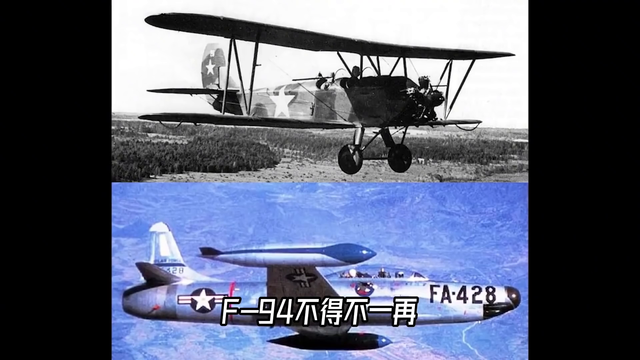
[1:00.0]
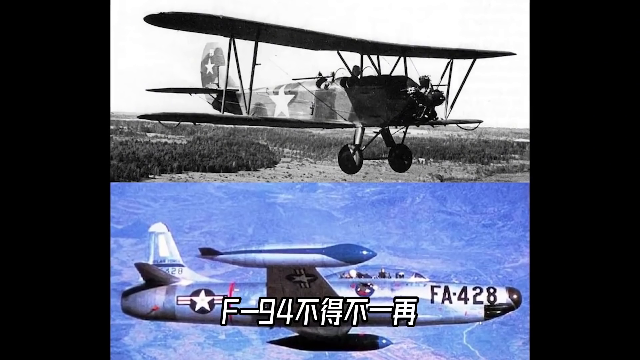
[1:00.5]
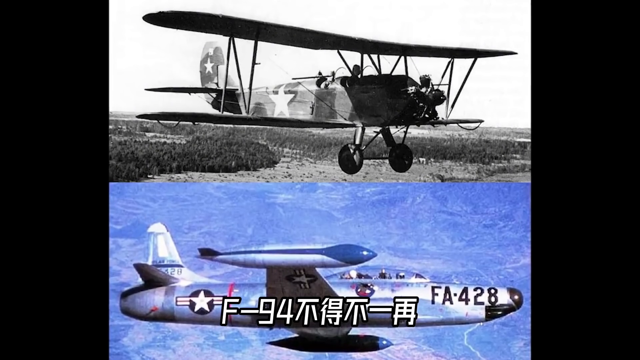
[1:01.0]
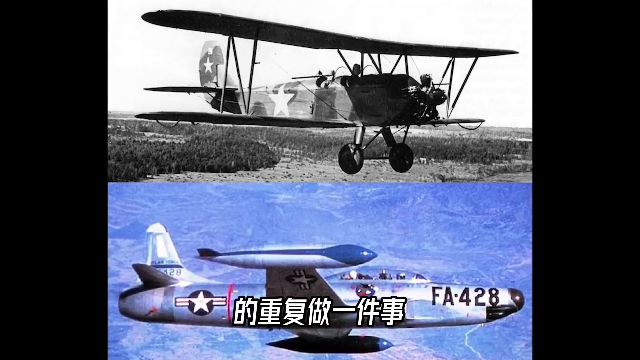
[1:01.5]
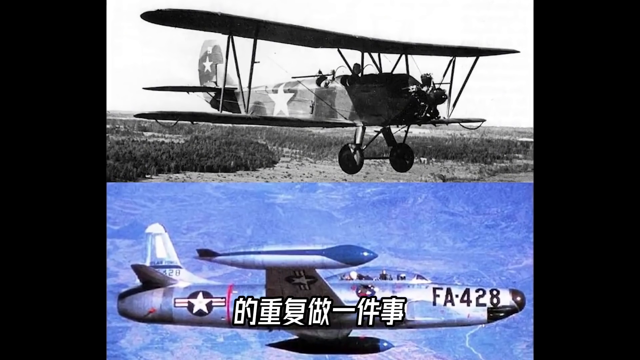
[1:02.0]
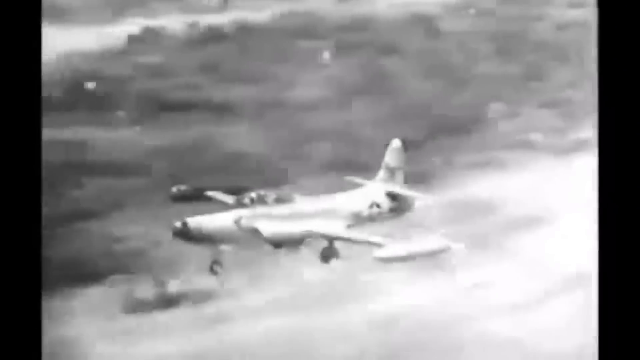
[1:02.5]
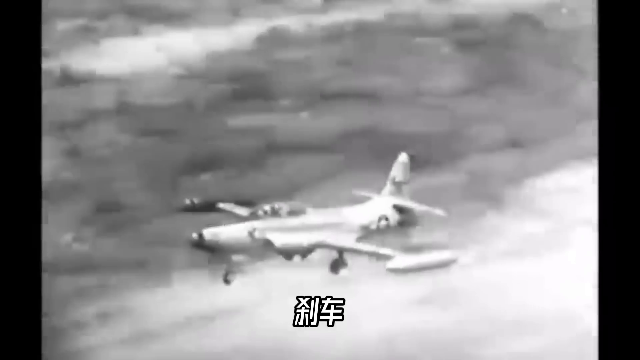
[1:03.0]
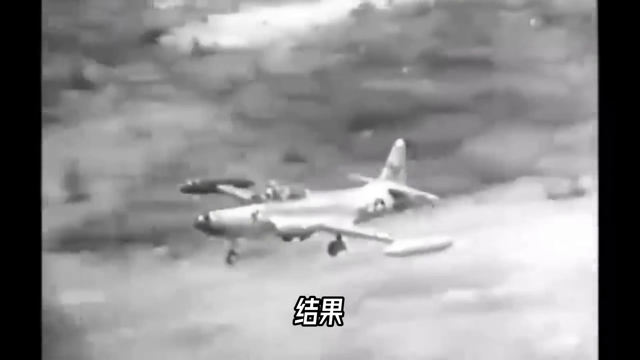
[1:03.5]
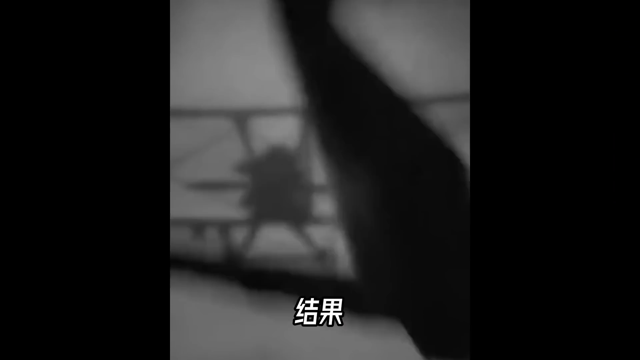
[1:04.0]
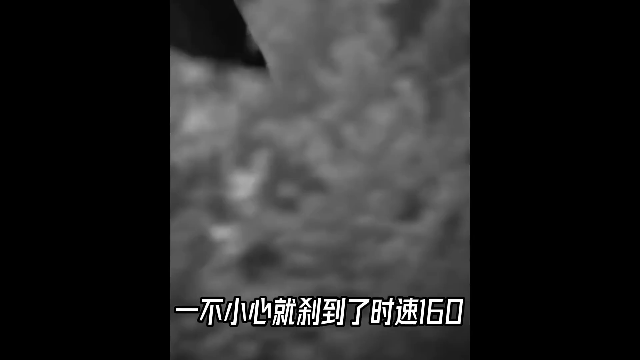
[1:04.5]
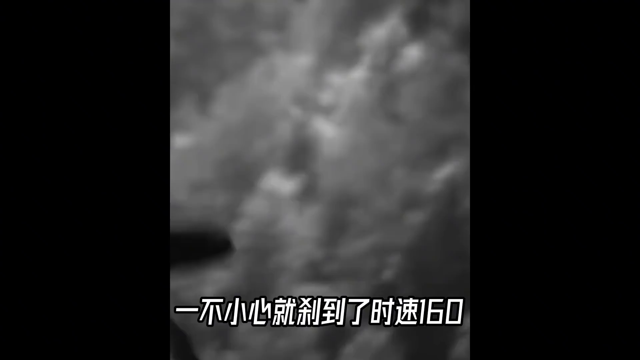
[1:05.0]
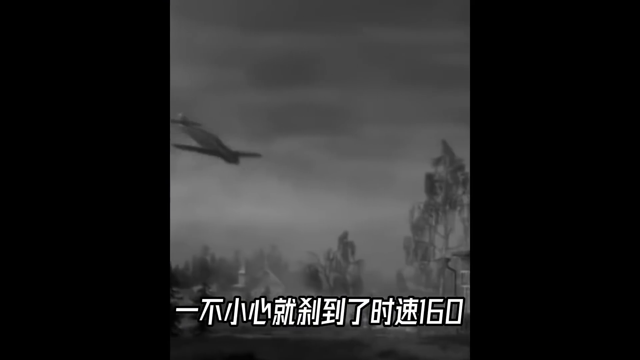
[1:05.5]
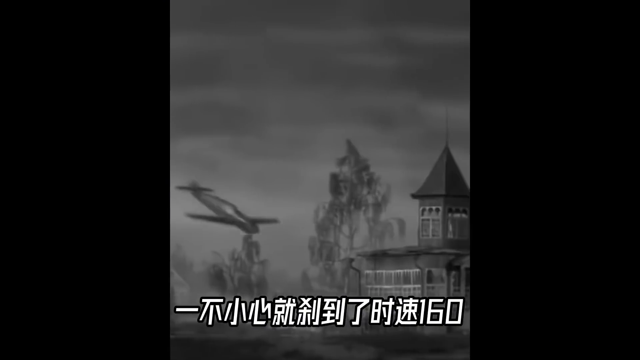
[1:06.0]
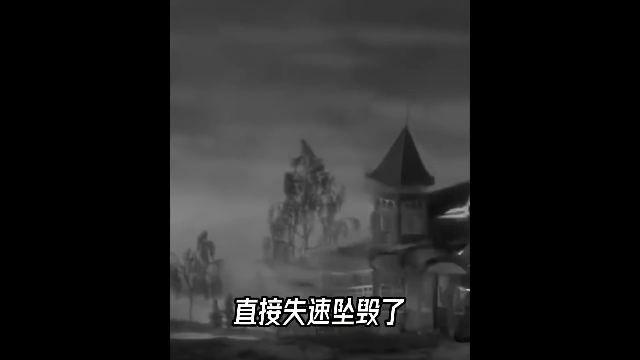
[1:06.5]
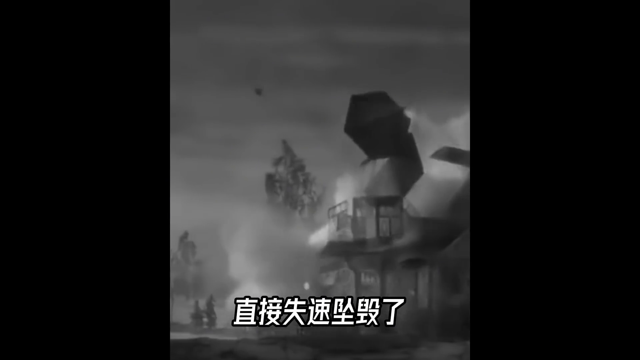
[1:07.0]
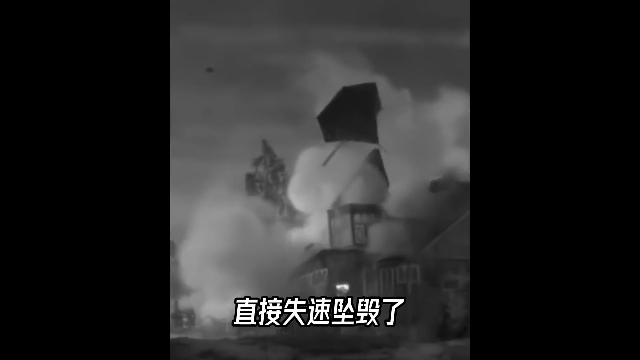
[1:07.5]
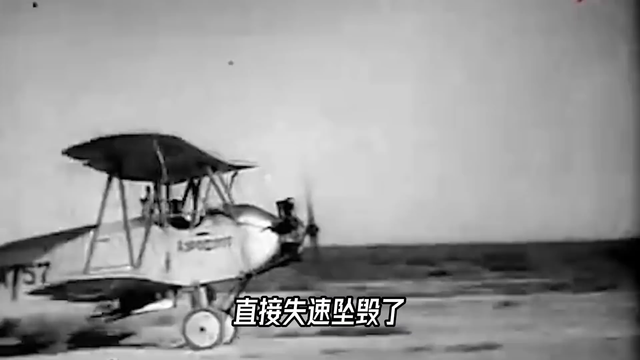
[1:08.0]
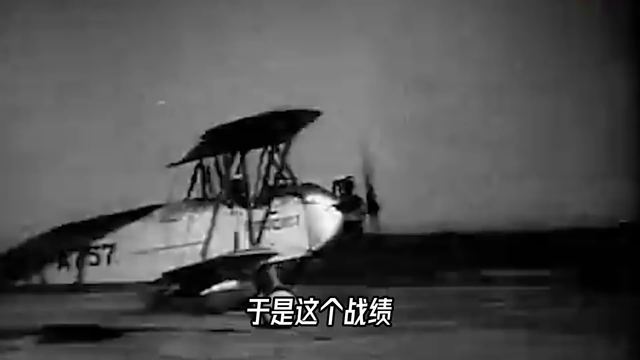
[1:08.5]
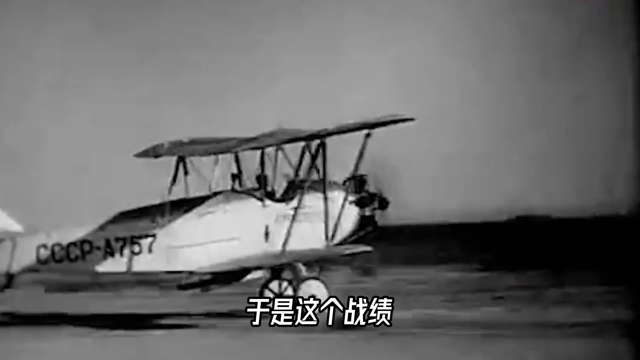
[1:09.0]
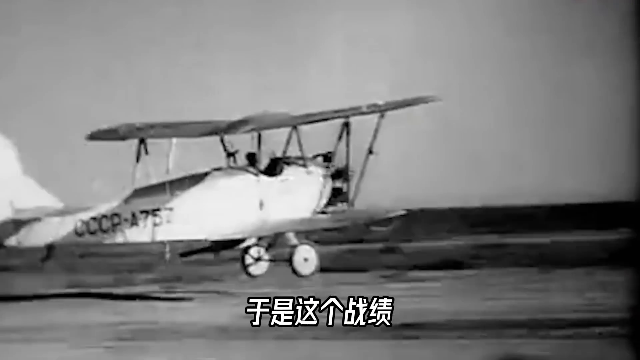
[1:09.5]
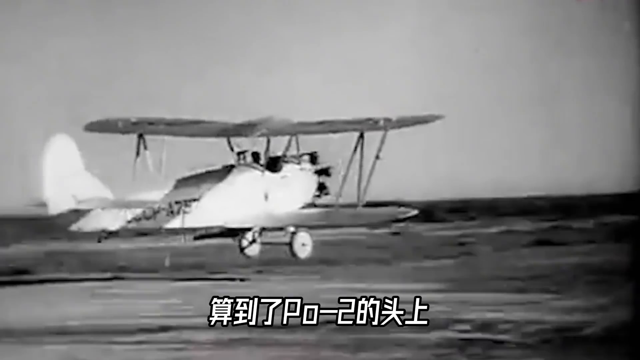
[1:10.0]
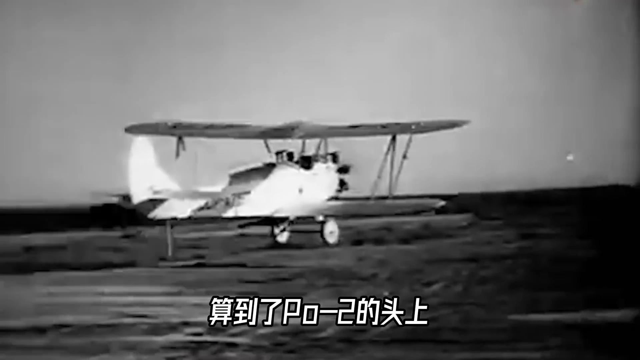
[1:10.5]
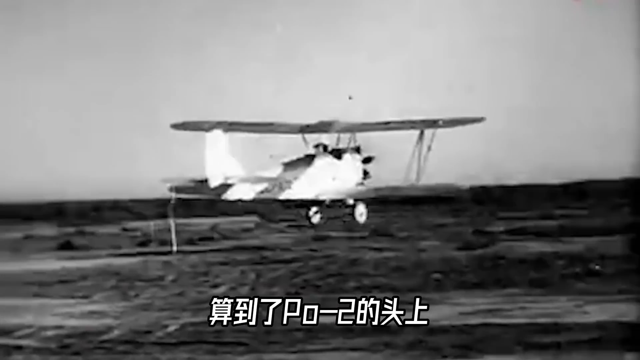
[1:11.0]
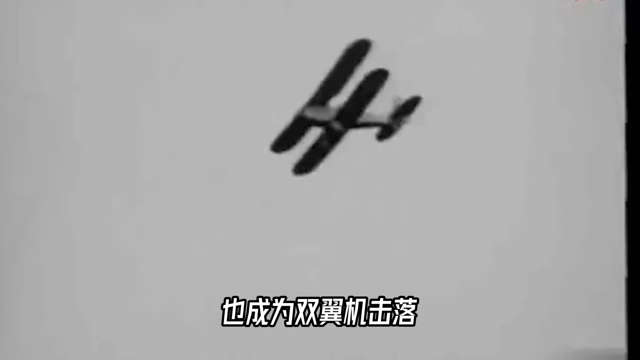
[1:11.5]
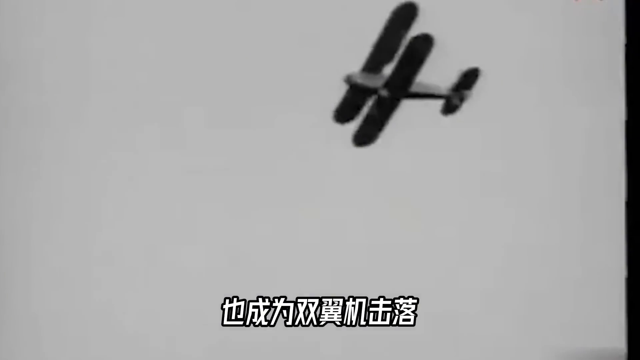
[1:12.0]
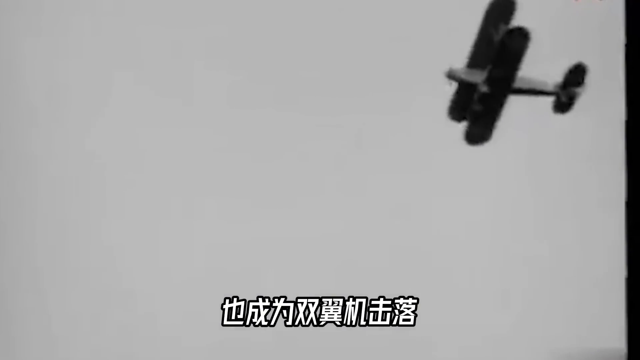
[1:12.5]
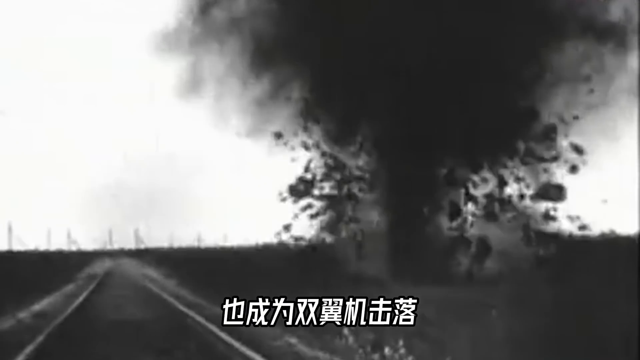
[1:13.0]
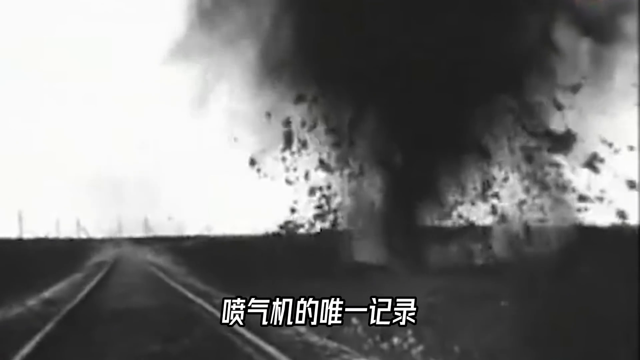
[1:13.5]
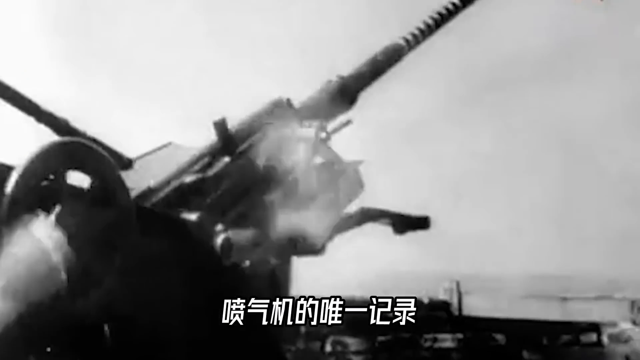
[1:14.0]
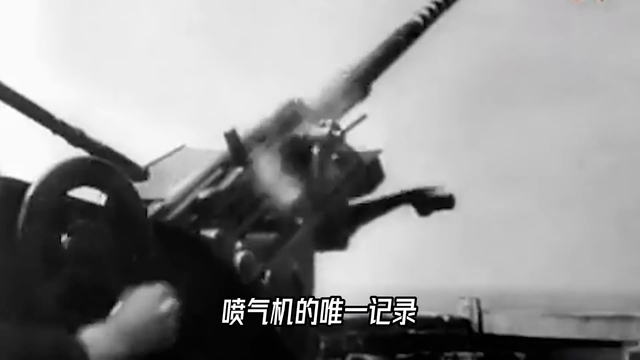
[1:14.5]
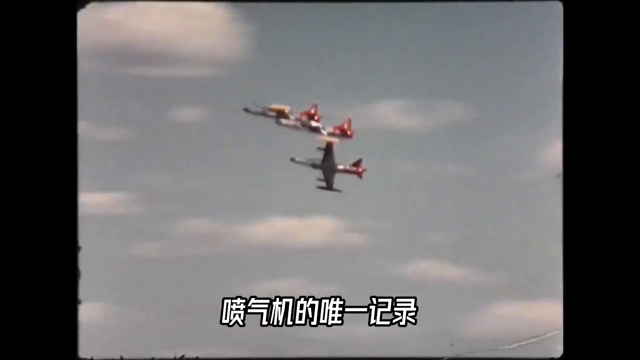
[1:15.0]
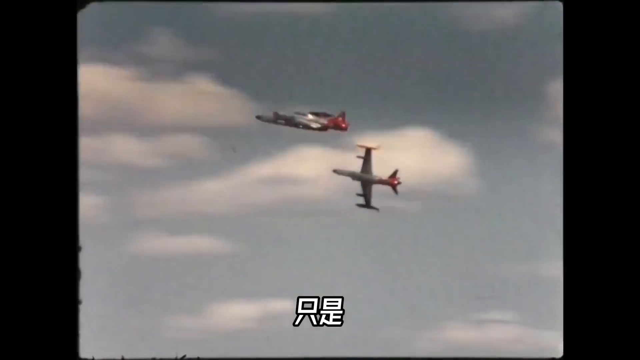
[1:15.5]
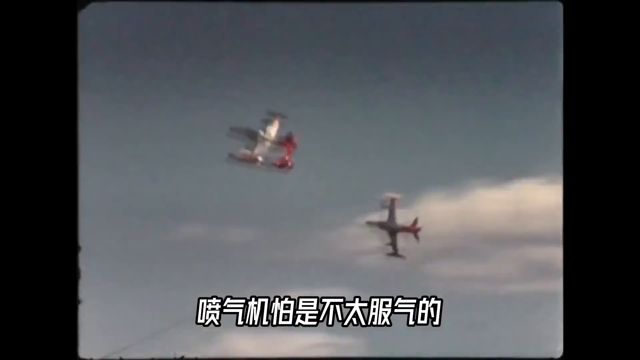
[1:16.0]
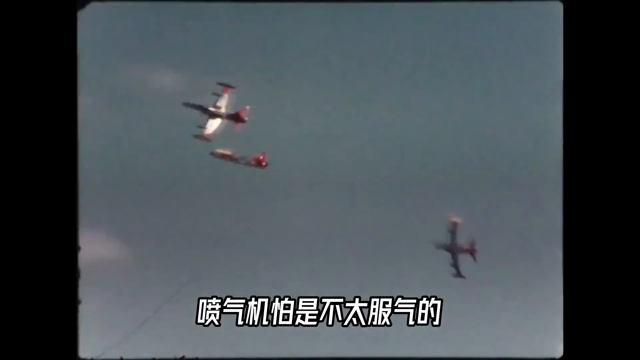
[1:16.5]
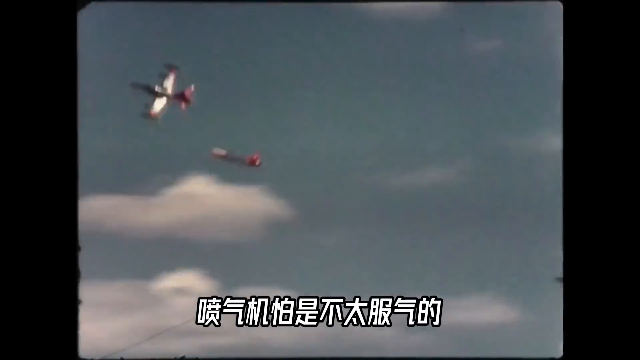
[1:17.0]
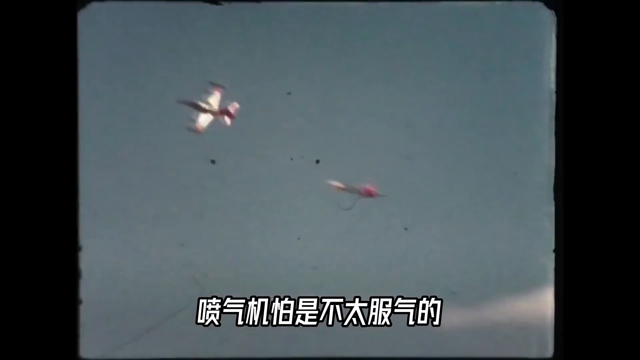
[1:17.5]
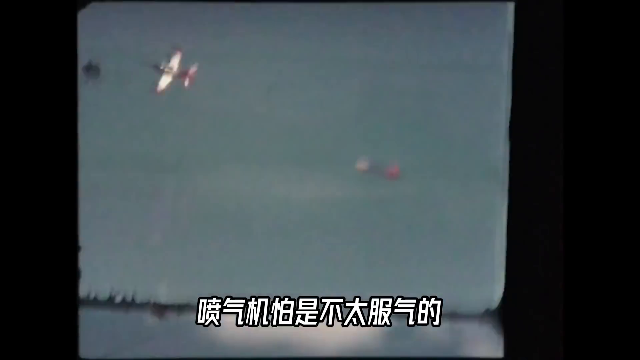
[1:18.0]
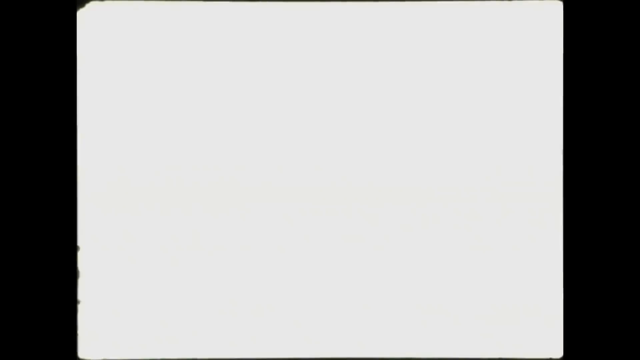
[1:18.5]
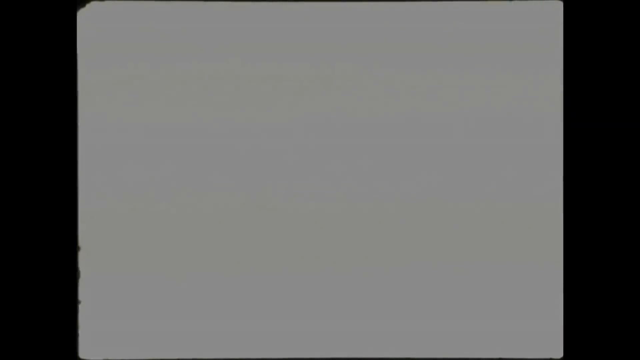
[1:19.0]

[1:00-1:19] Black-and-white scenes show fighter planes, some flying over towns, with an explosion between them. A caption in an Asian alphabet, either Chinese or Japanese, runs across the bottom of the screen. One scene shows a very large explosion. There is a scene of an open propeller plane on a runway, which then takes off, and another similar plane flies through the air. All of this footage is in black and white, with a continued caption across the bottom of the screen. The video cuts to a machine gun on the ground aimed at the sky and being fired. It then switches to color footage of three very modern fighter planes with red tips on the wings and red tails flying through the sky. The video seems to show the evolution of fighter planes over the last several decades.